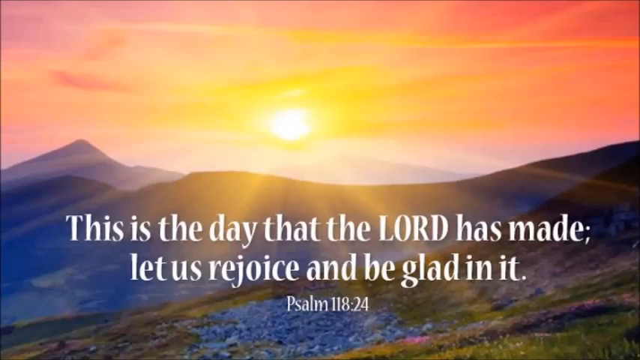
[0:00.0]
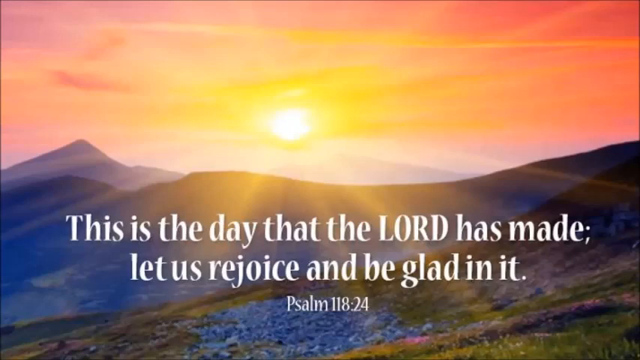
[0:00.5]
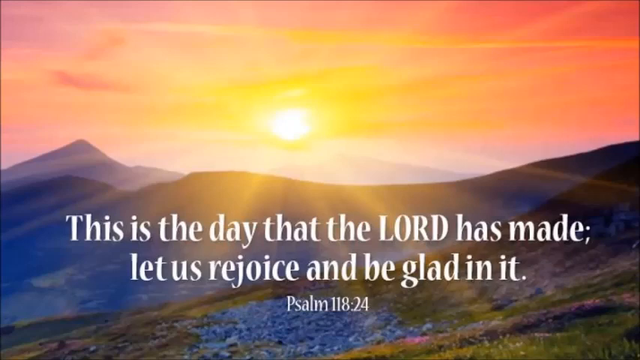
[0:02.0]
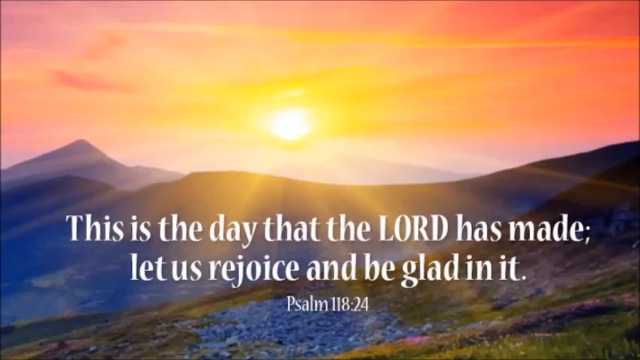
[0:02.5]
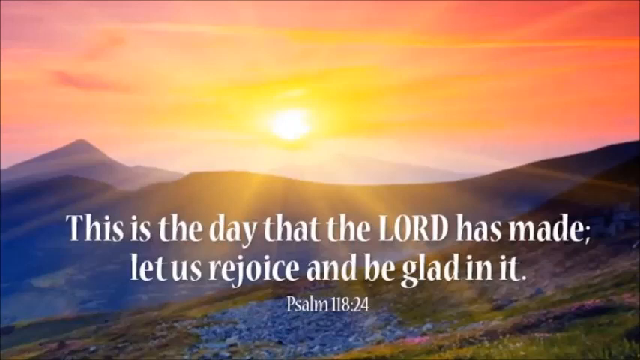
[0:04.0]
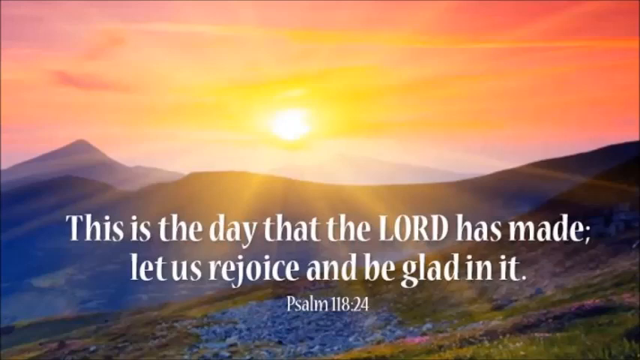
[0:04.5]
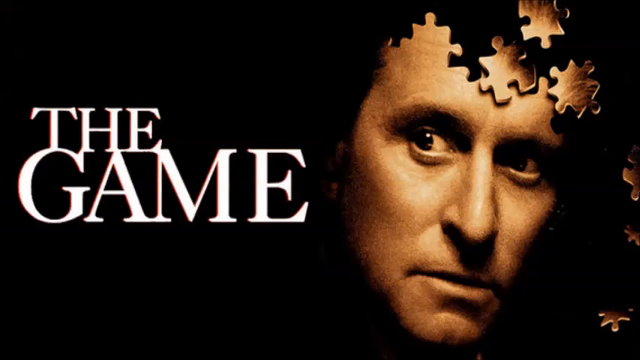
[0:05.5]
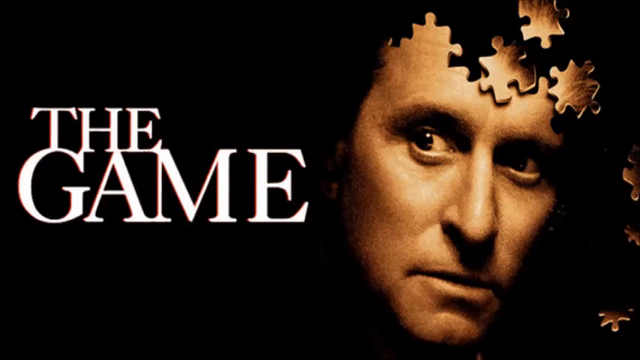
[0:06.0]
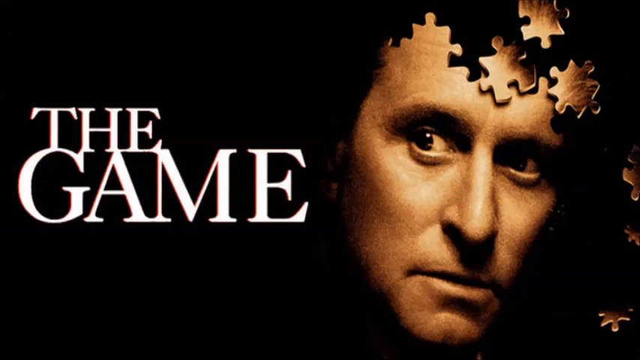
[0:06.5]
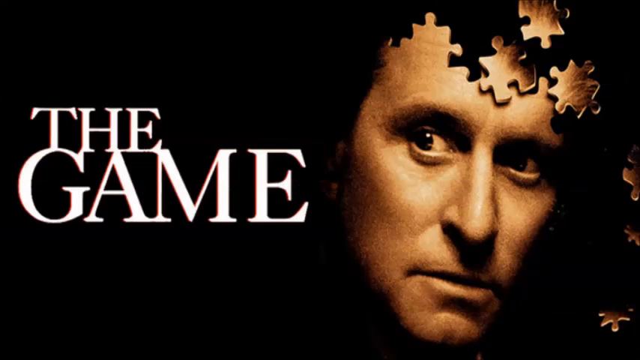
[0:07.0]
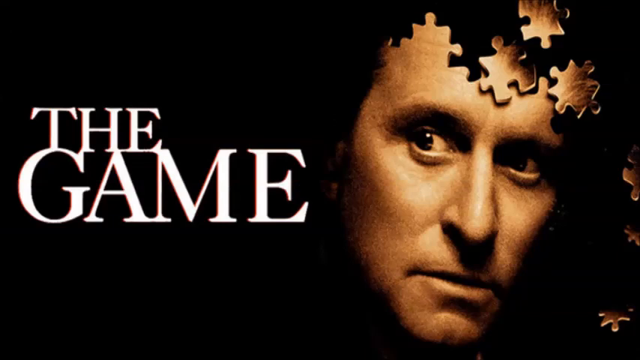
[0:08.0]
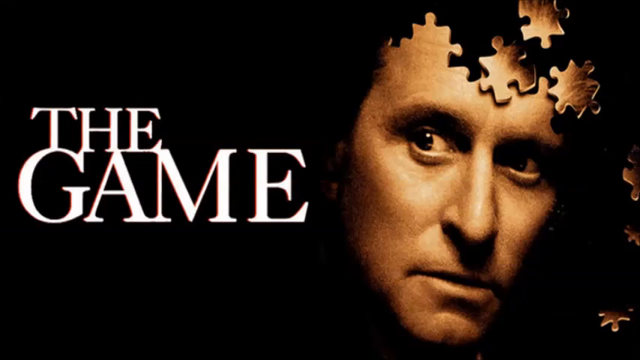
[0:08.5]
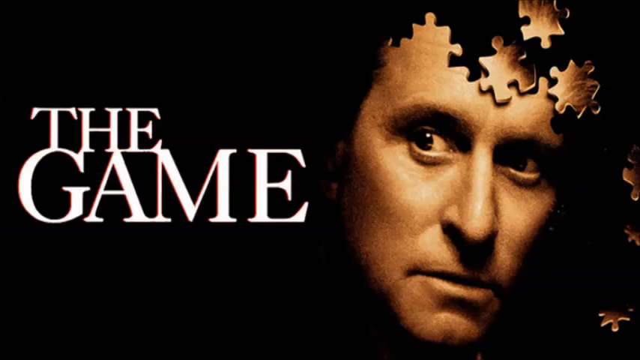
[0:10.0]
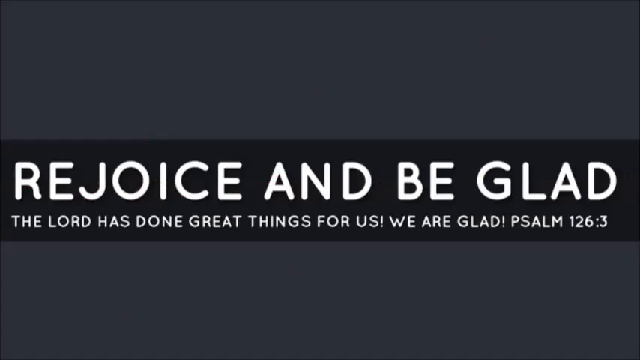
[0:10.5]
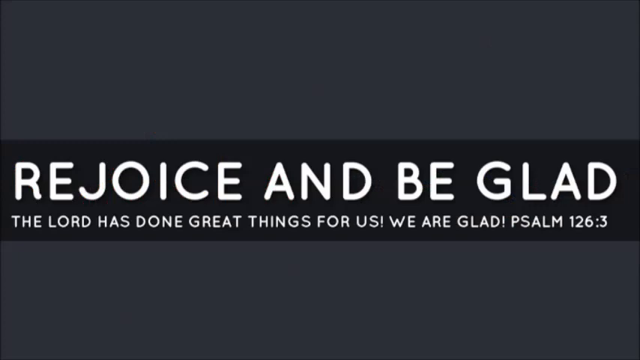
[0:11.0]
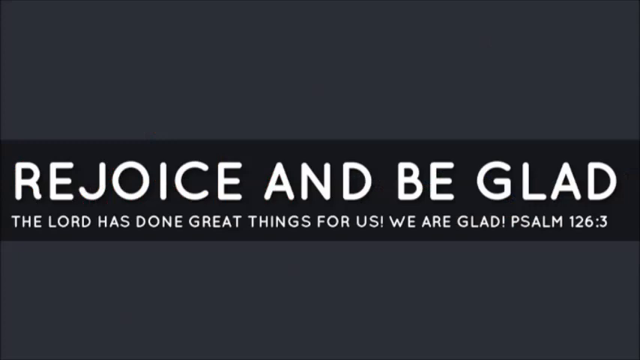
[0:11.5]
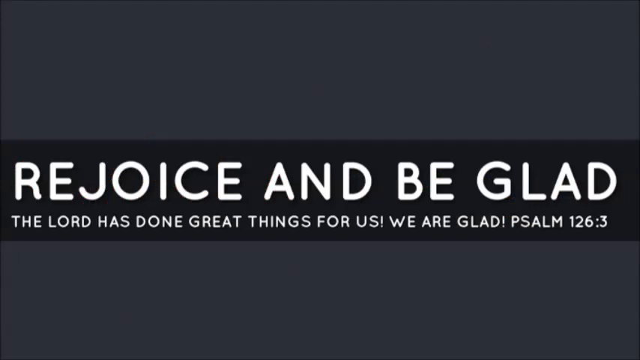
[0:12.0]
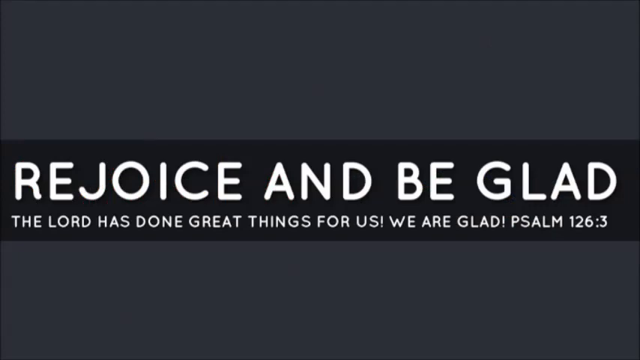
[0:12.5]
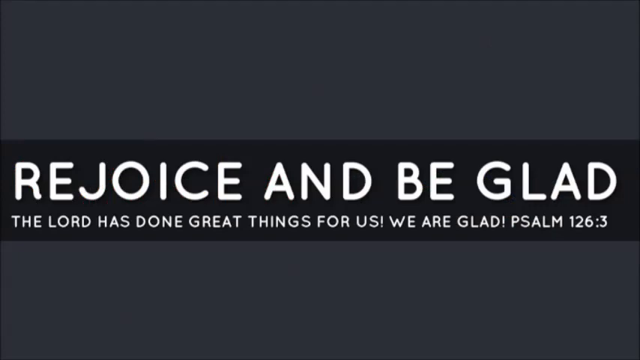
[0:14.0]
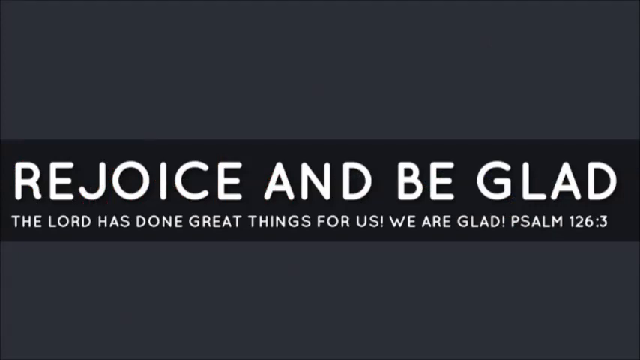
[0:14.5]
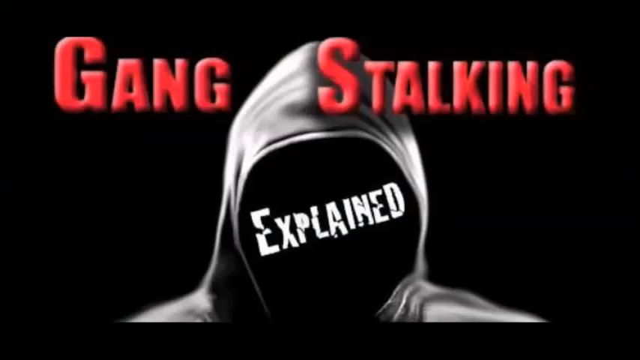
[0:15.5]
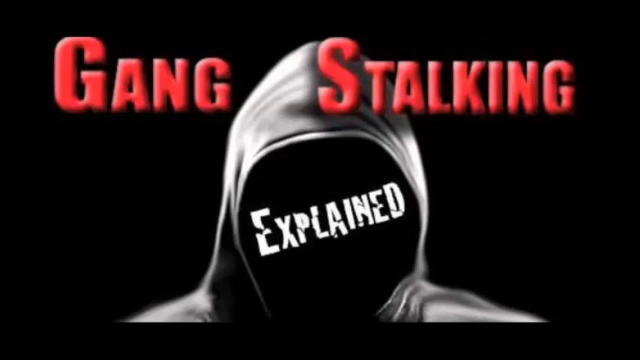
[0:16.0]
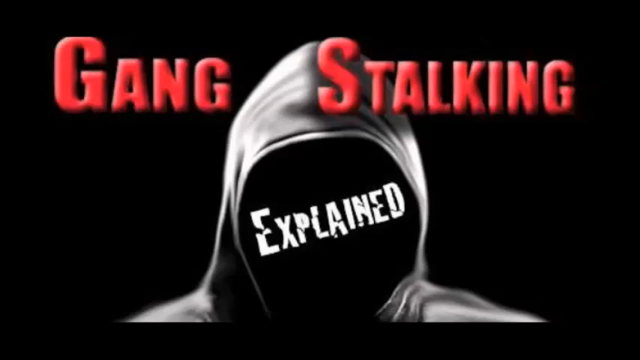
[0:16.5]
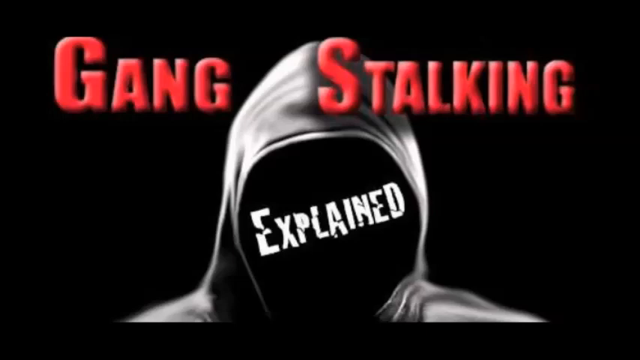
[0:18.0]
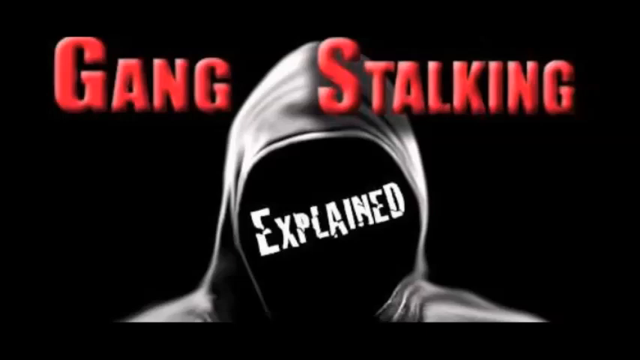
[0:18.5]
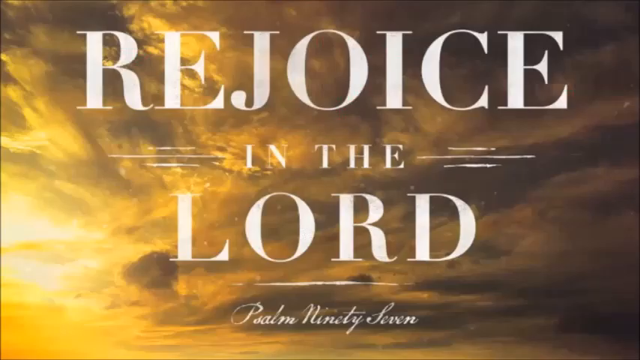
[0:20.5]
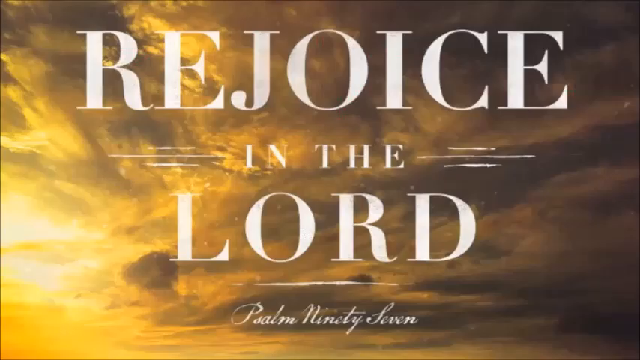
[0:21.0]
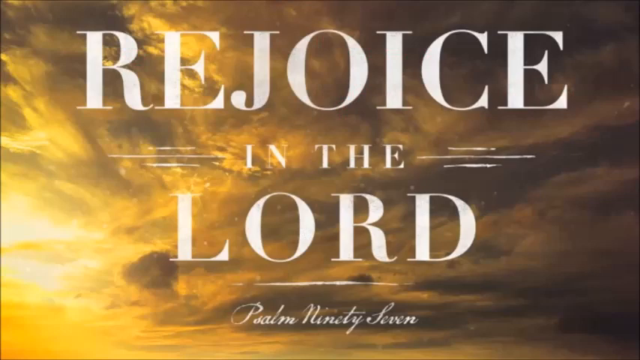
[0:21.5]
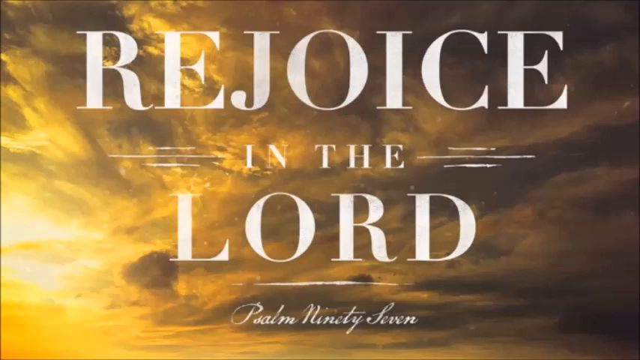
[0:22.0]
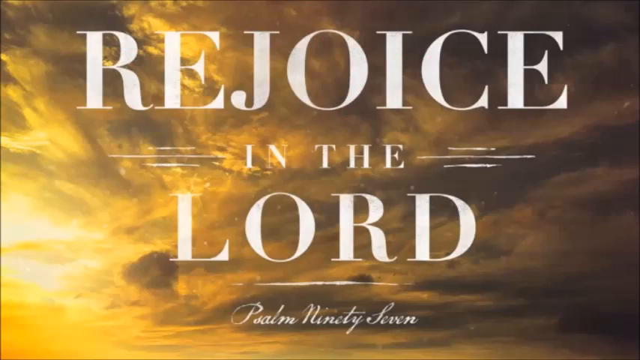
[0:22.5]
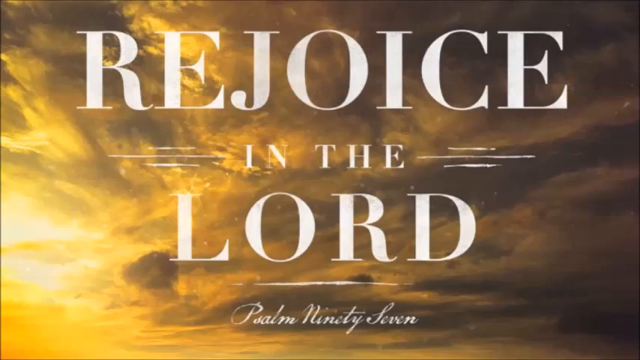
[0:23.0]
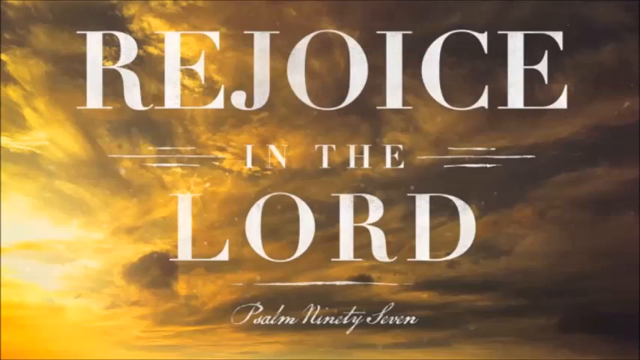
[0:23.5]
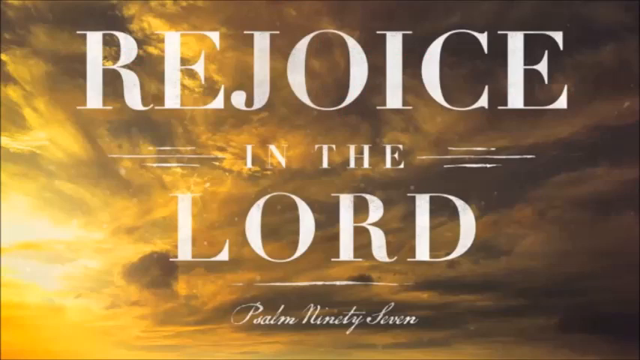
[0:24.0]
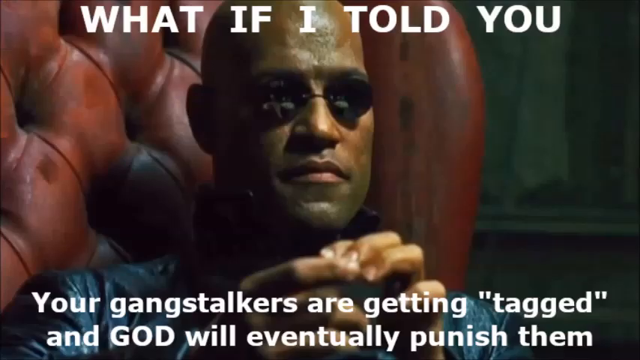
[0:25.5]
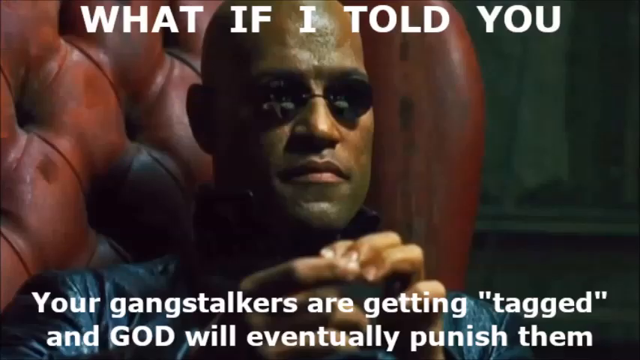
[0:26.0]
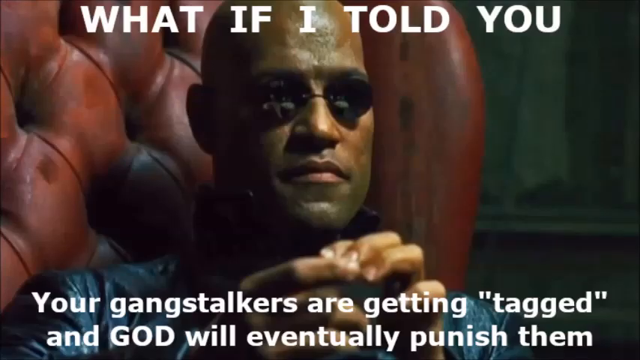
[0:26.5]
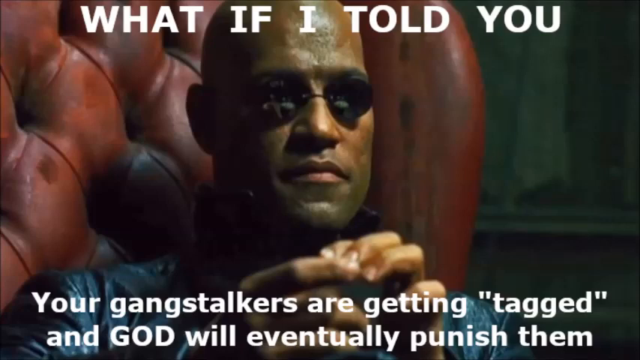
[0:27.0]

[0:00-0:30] A photo fills the whole screen: a mountain landscape with an orange sky and the sun positioned exactly in the center of the image, right above the mountains. White text is overlaid on the lower part of the photo. Next comes an image of a man positioned on the right of the screen; the upper part of his face is composed of puzzle pieces, while on the left there is rather large white text on a black background. Another image follows with a gray background and two rows of white text in the center, inside a banner slightly darker than the background. Then there is an image of a hooded man with red text at the top and white text in place of the face. The next image shows a sky covered by clouds with a rather warm light, and white text covering the whole frame. Finally, there is an image of a colored man wearing sunglasses, with white text at both the top and the bottom.